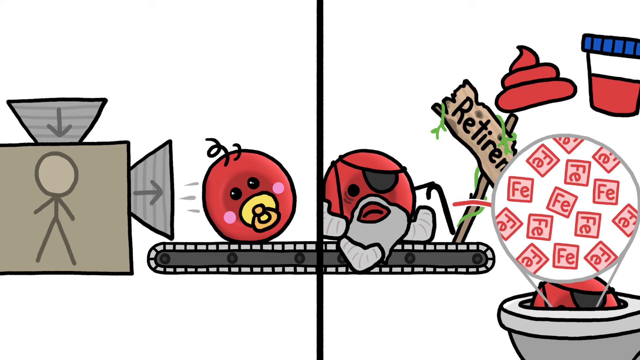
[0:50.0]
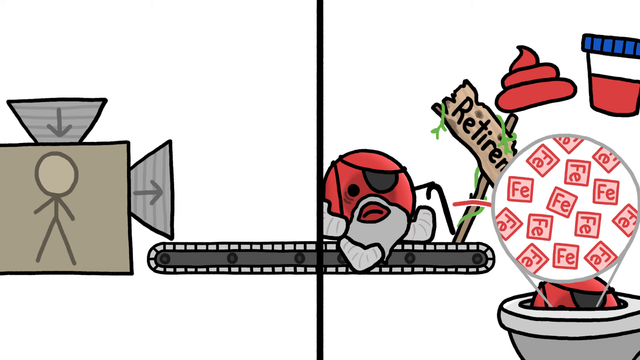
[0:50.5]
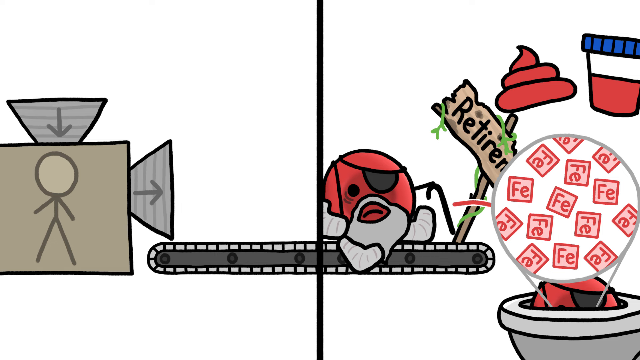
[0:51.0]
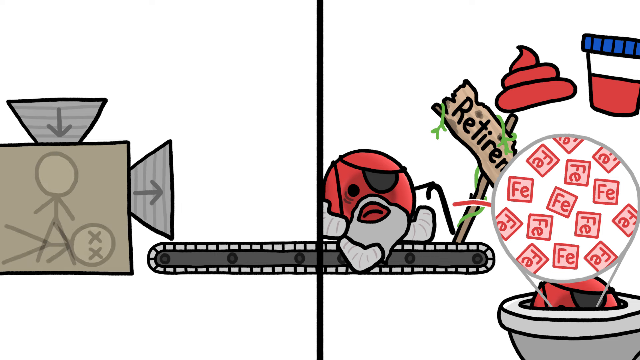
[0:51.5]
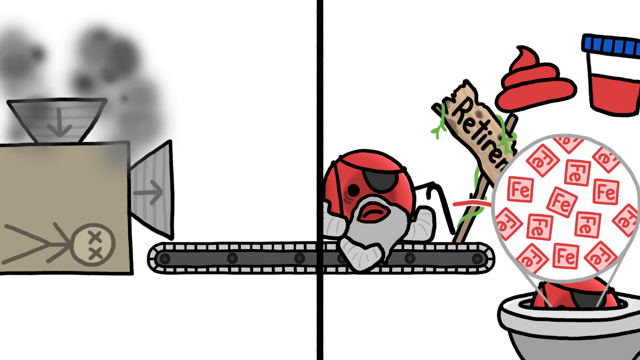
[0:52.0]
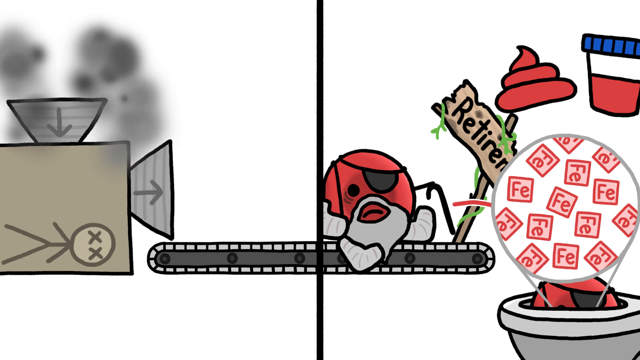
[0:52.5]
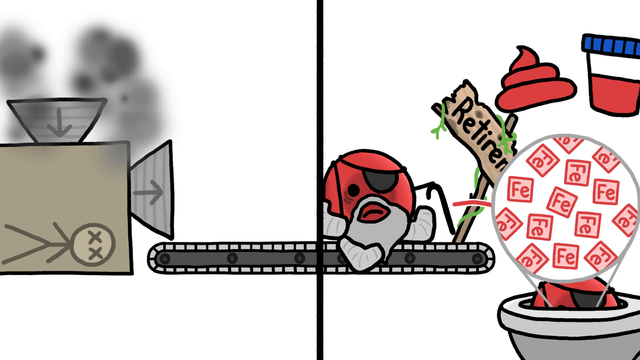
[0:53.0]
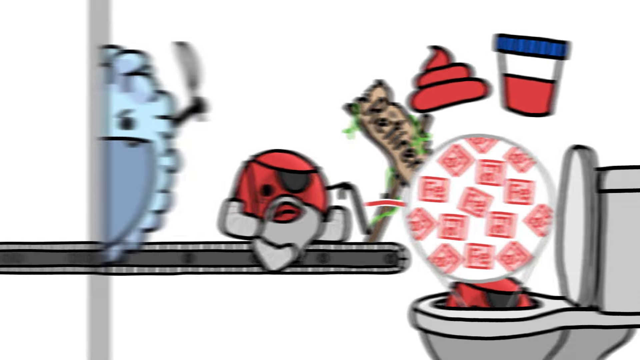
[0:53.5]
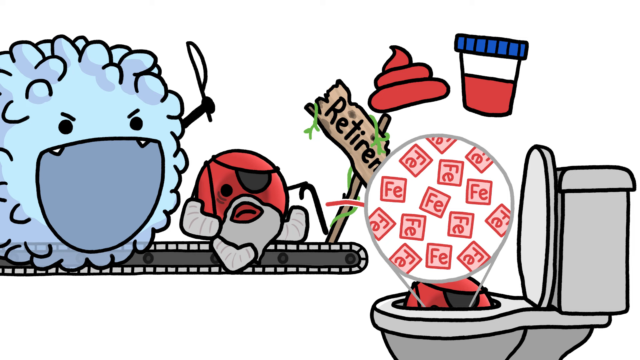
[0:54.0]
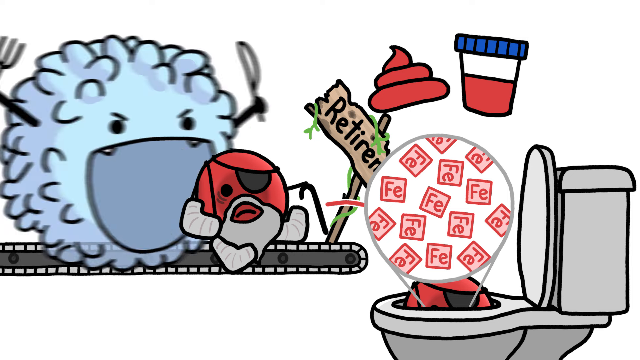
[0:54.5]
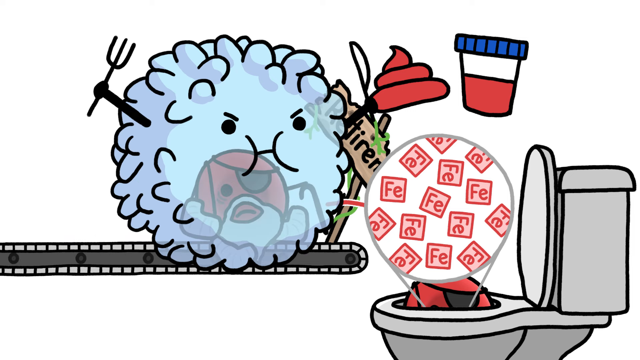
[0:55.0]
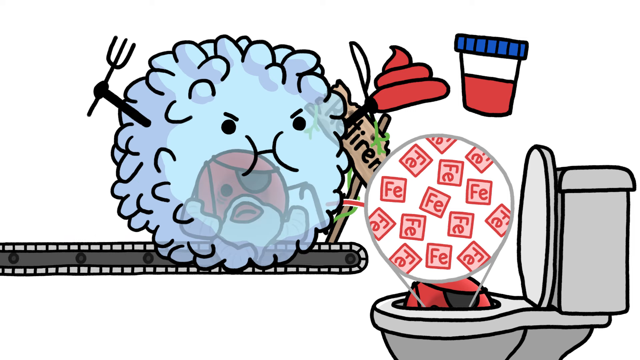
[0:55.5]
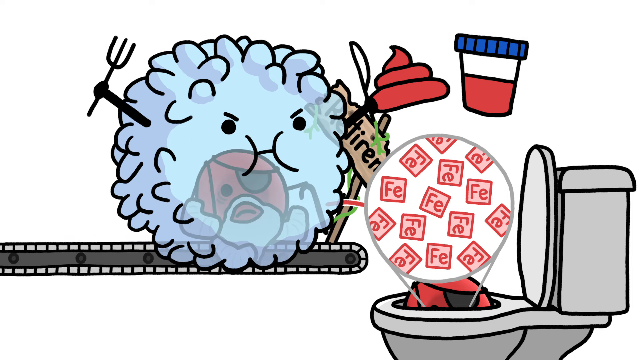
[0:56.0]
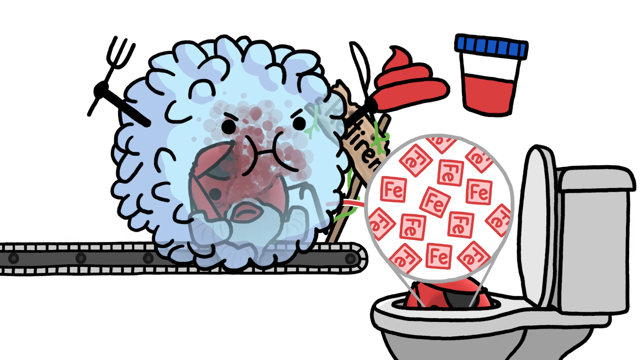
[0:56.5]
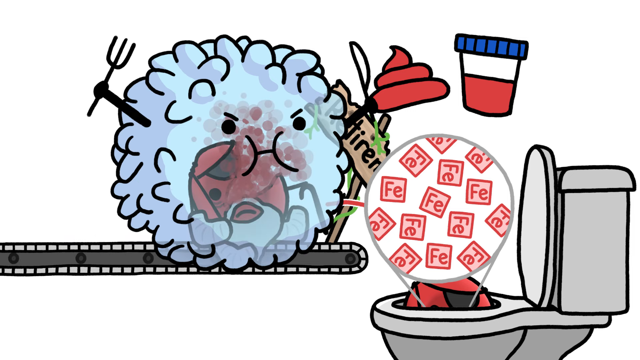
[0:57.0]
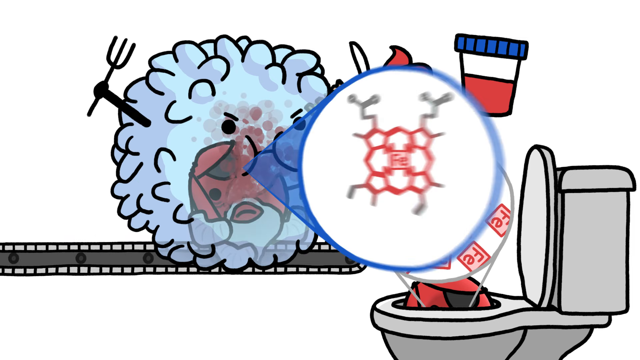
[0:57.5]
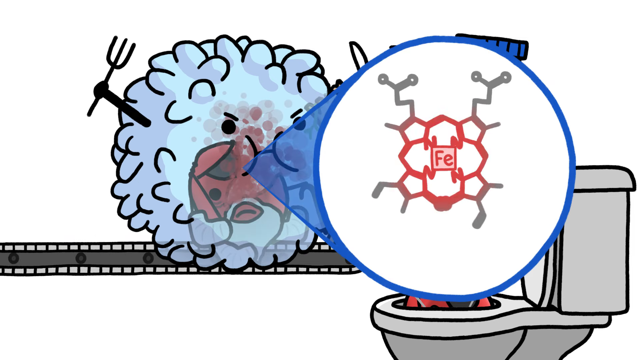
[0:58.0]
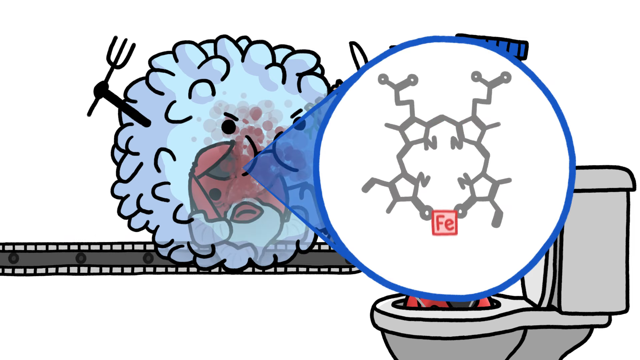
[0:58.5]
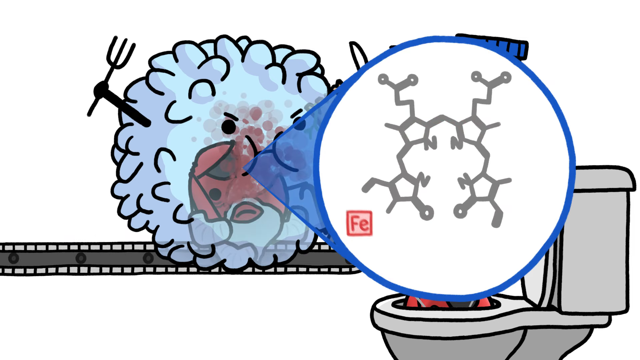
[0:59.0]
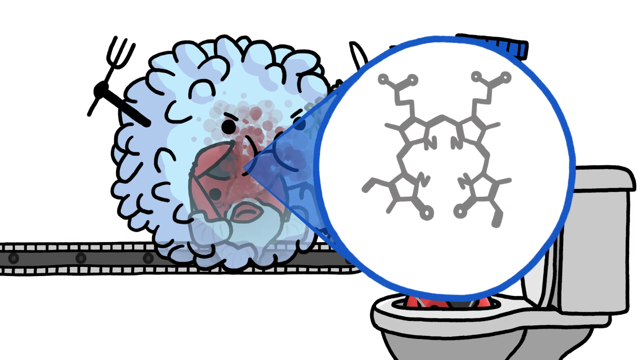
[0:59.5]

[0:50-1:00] In the split screen, one side shows a berry coming out of the box onto the conveyor belt, while the other side shows a berry going to retirement and heading towards the toilet. The berry on the left of the conveyor belt disappears, a puff of smoke appears above the box it was ejected from, and the sick person is now lying on their side with crosses for eyes, as if they have just died. The view changes to show the full right side of the screen, with the berry heading towards the toilet and, behind it, a giant molecule-like thing with a massive mouth heading towards that berry. The giant molecule has a knife in its hand and starts to eat the berry that was waiting to go into the toilet. A circle comes out of its mouth with a diagram showing "FE" in the middle and what appears to be bacteria holding either side of it. The "FE" drops from the middle of the diagram and heads out of shot.